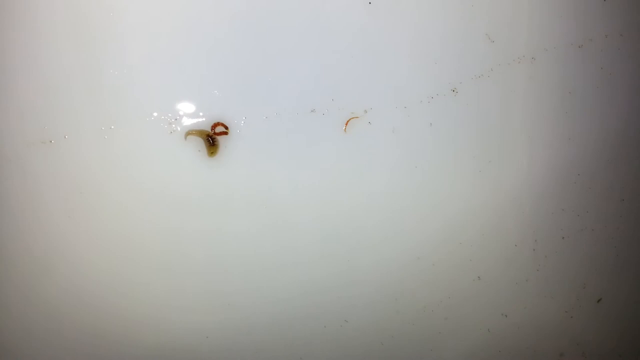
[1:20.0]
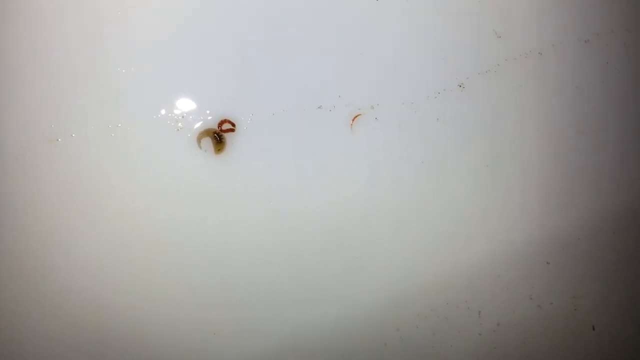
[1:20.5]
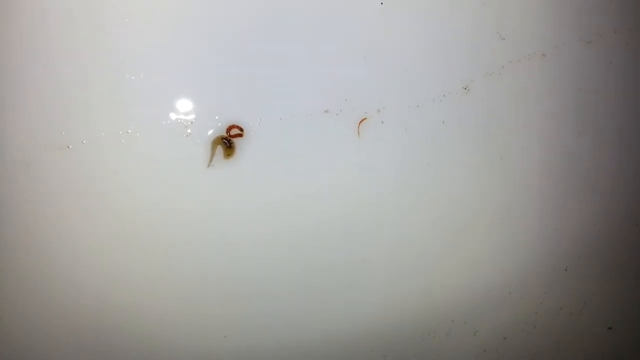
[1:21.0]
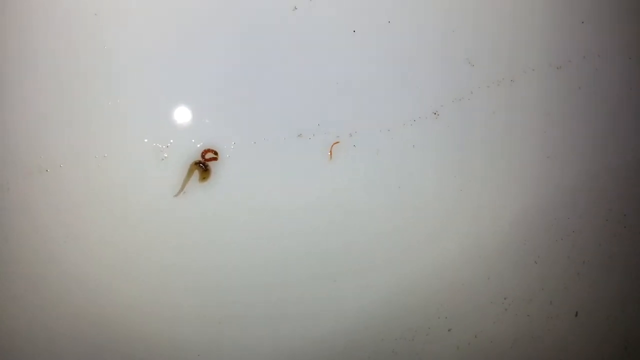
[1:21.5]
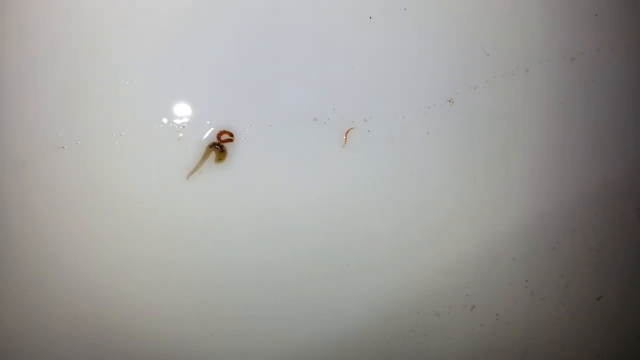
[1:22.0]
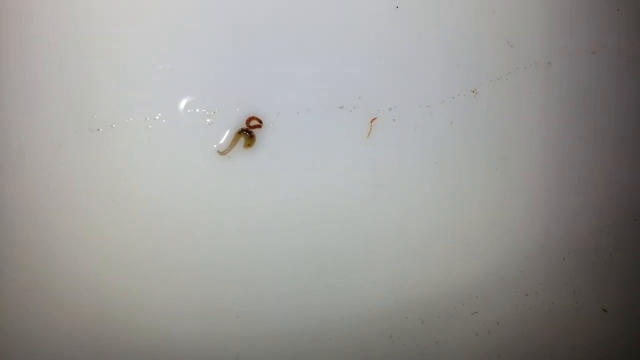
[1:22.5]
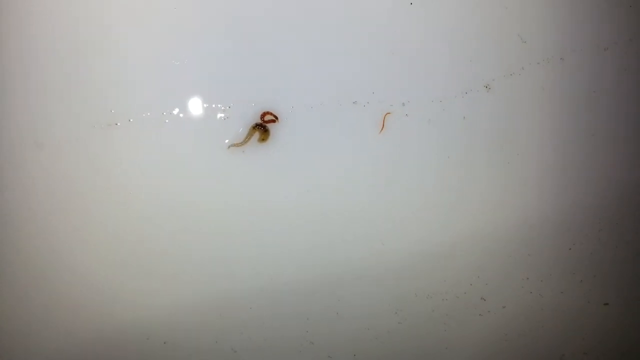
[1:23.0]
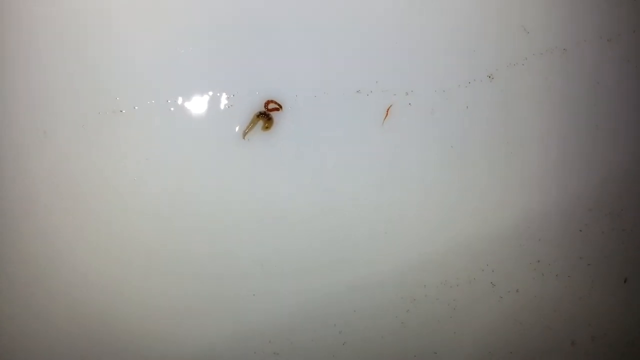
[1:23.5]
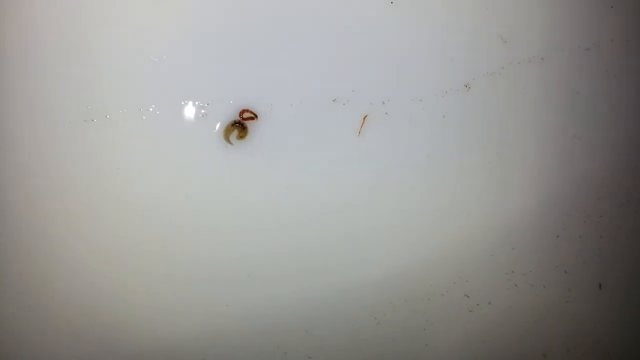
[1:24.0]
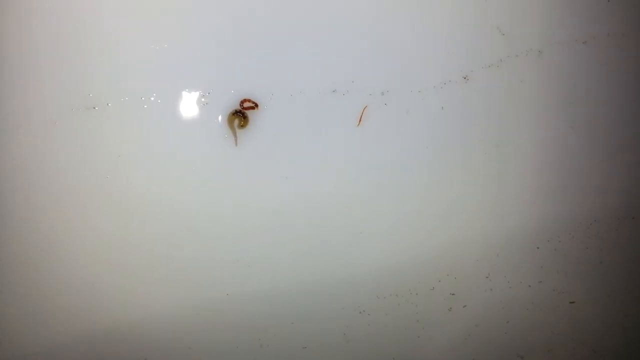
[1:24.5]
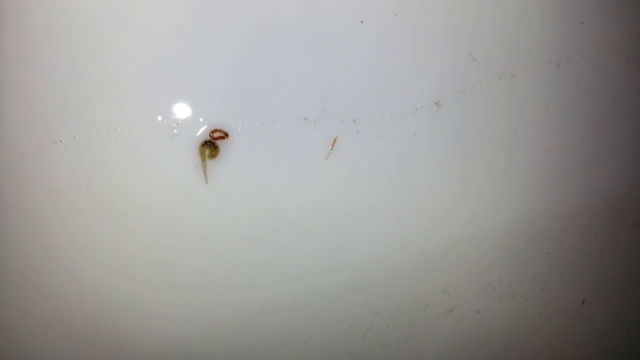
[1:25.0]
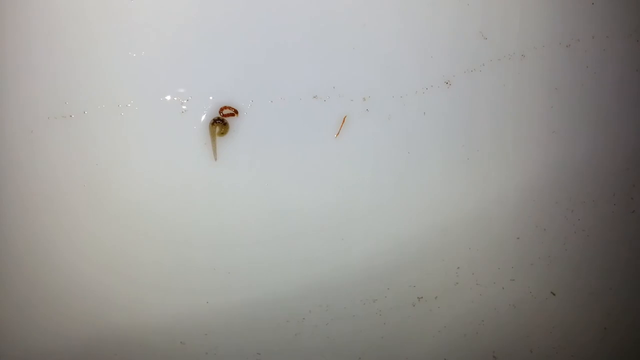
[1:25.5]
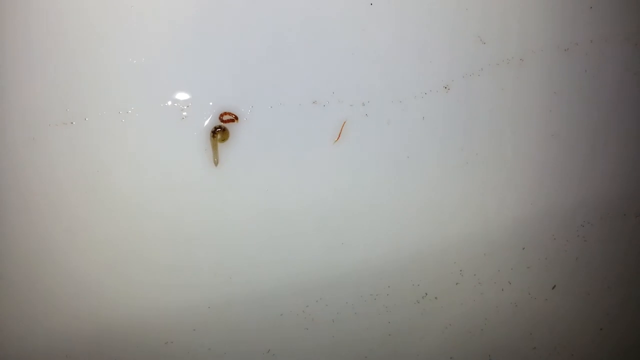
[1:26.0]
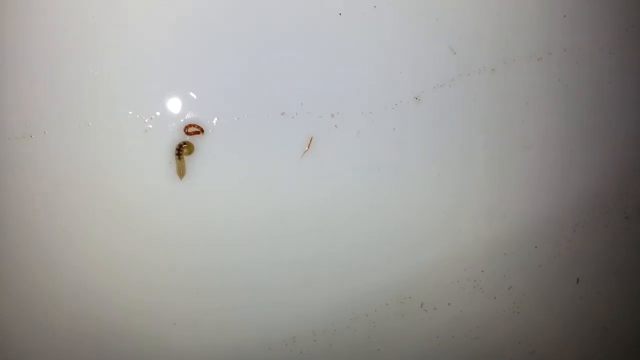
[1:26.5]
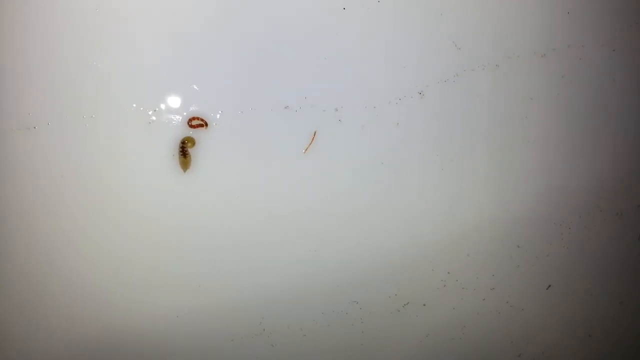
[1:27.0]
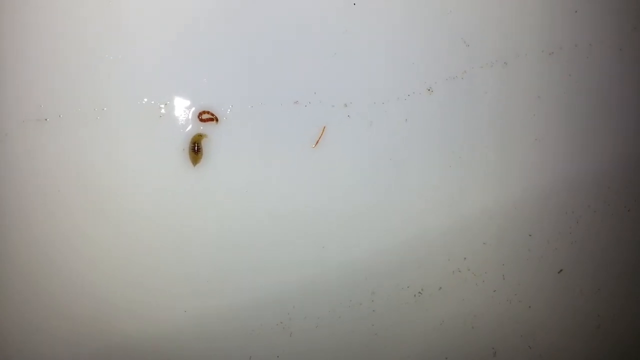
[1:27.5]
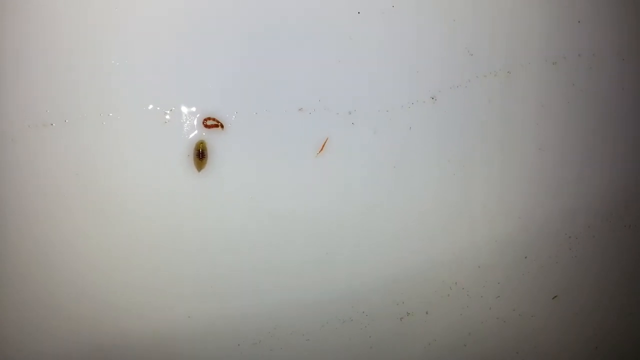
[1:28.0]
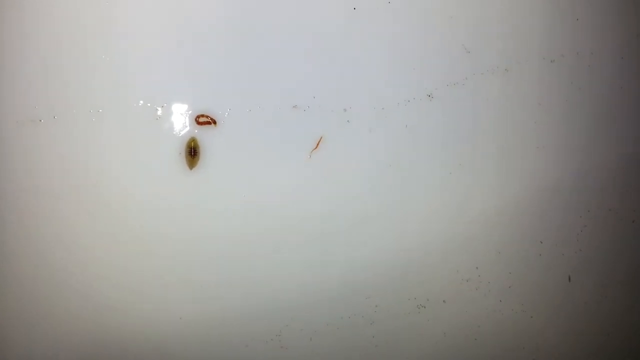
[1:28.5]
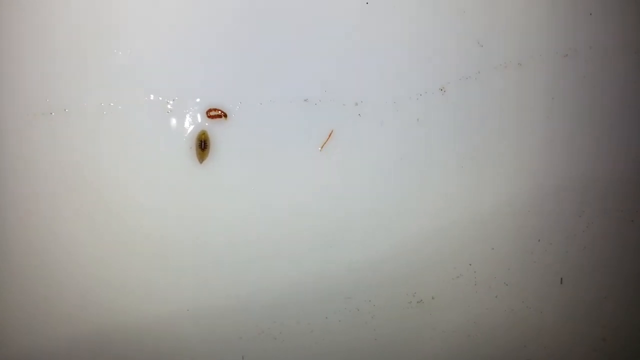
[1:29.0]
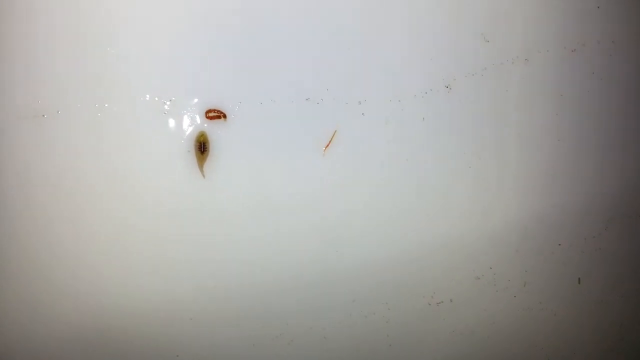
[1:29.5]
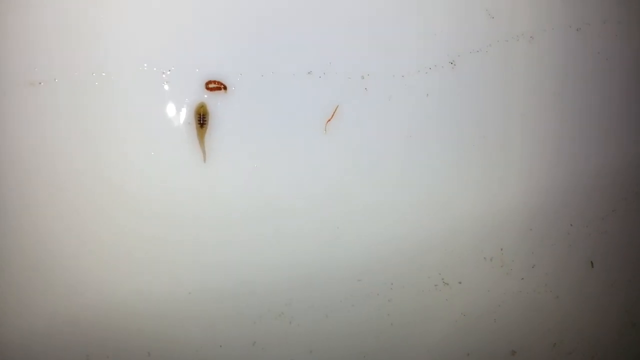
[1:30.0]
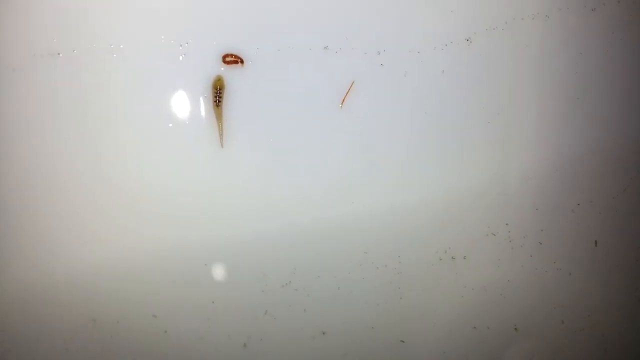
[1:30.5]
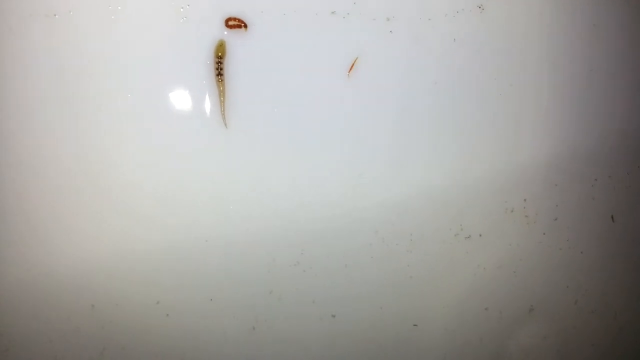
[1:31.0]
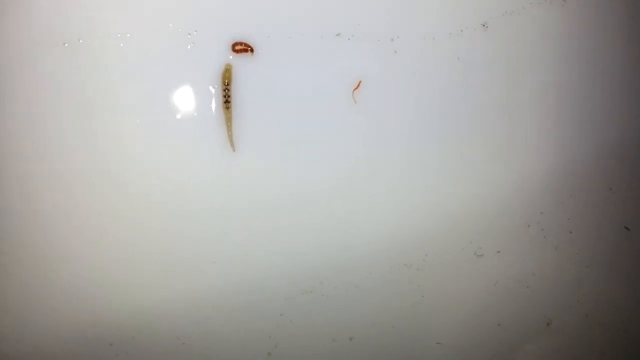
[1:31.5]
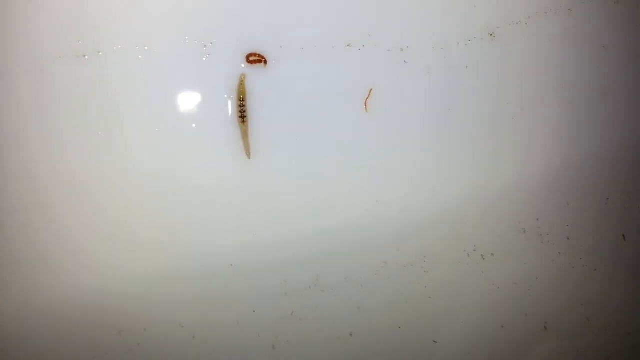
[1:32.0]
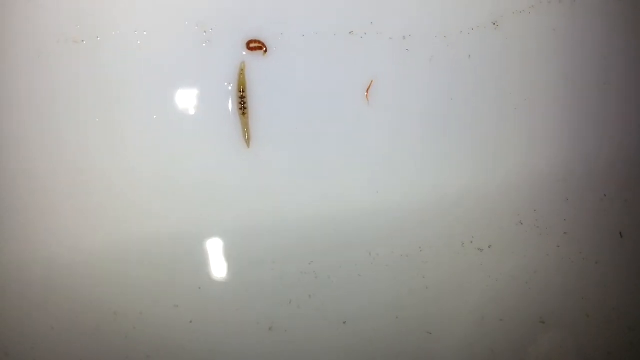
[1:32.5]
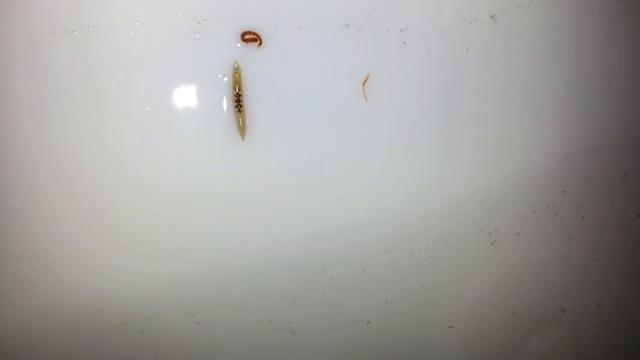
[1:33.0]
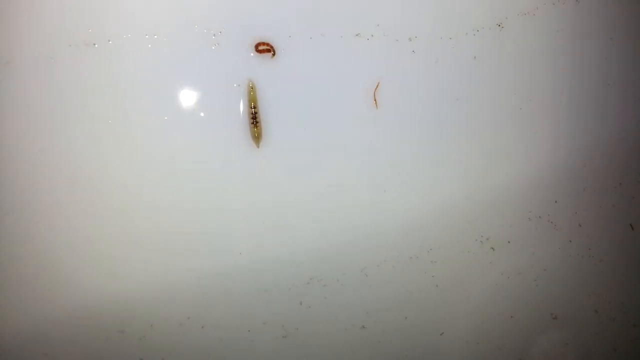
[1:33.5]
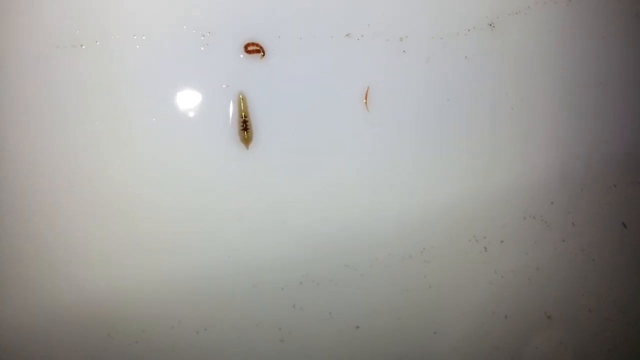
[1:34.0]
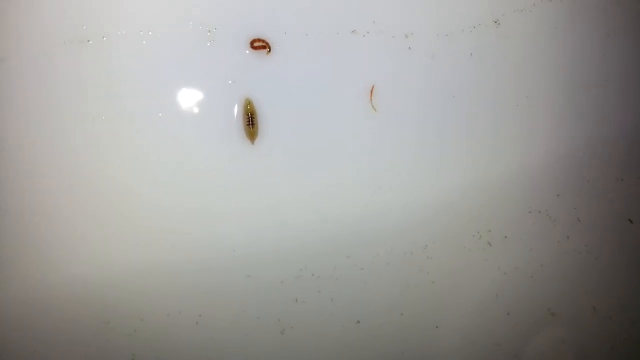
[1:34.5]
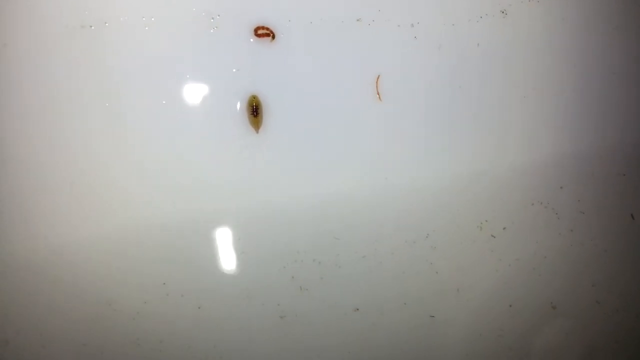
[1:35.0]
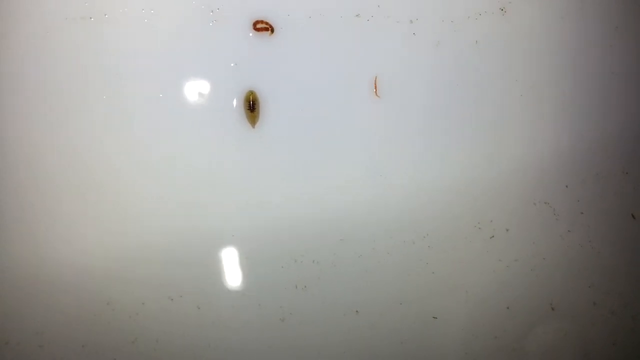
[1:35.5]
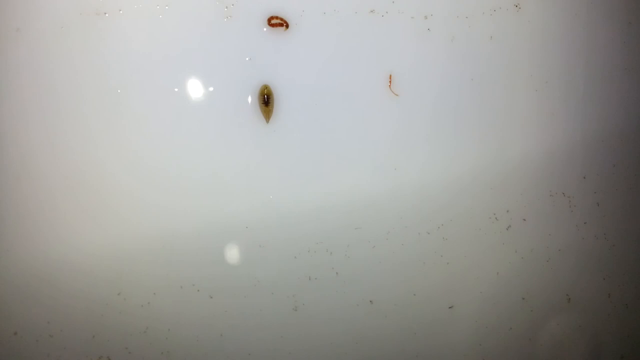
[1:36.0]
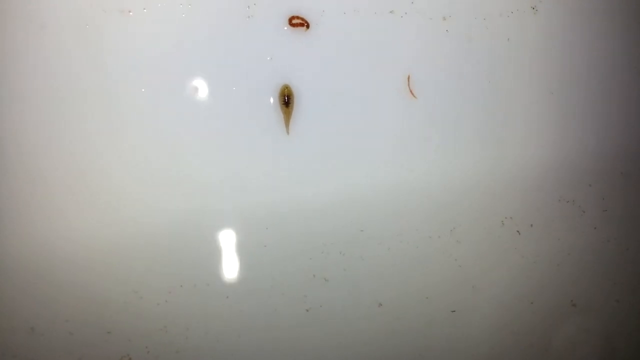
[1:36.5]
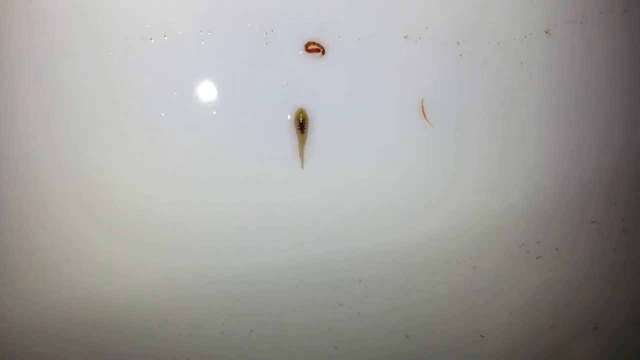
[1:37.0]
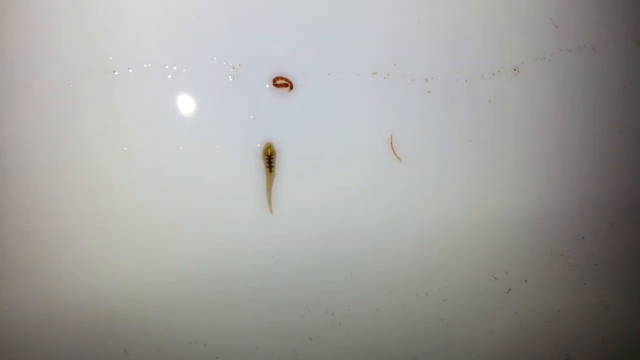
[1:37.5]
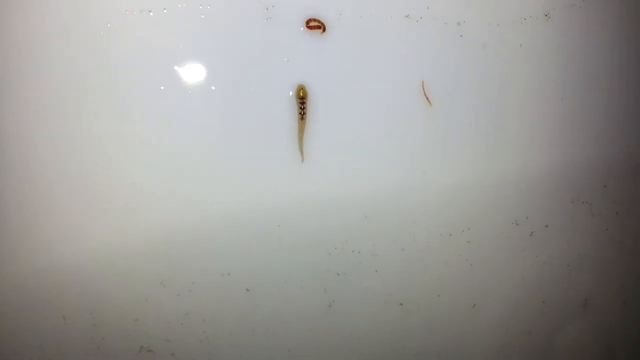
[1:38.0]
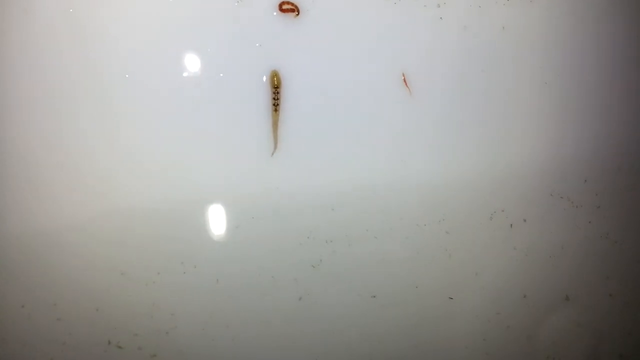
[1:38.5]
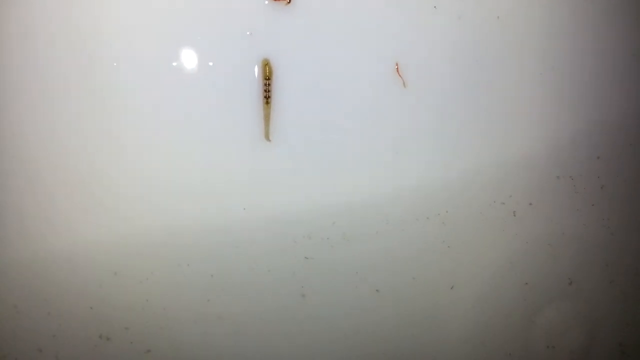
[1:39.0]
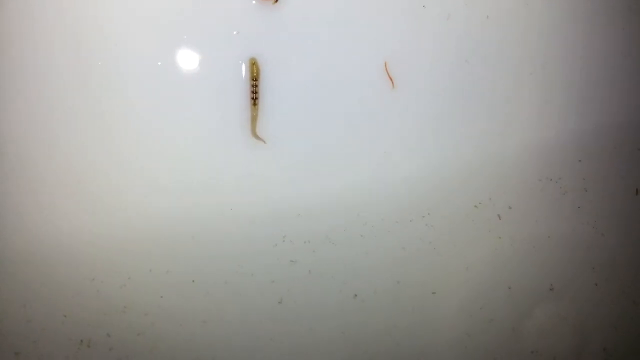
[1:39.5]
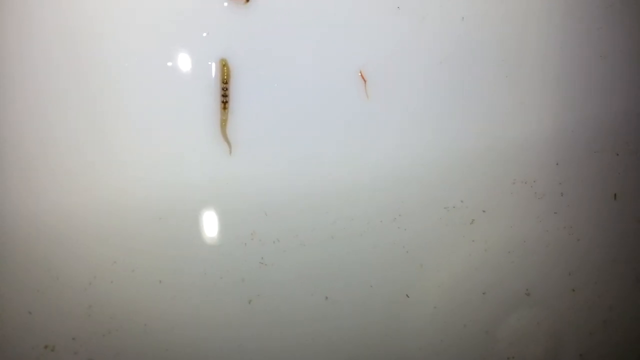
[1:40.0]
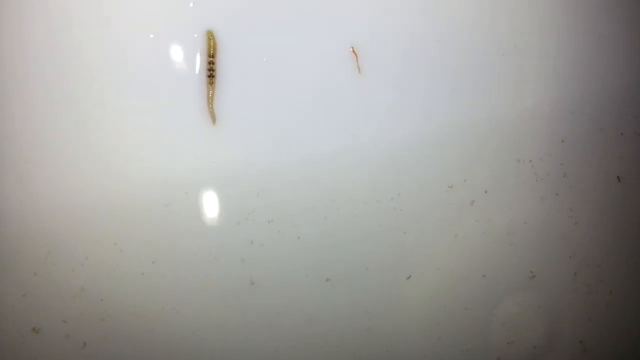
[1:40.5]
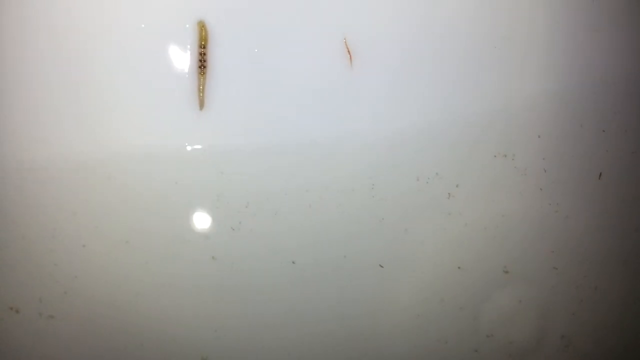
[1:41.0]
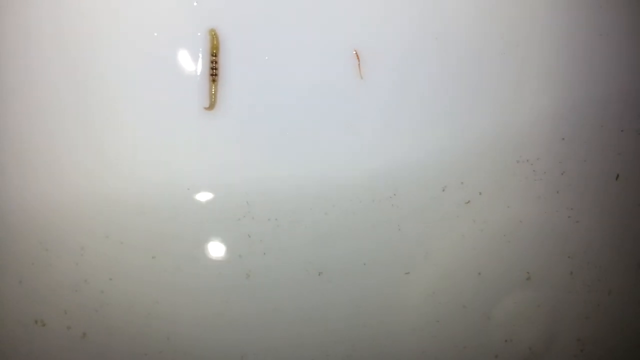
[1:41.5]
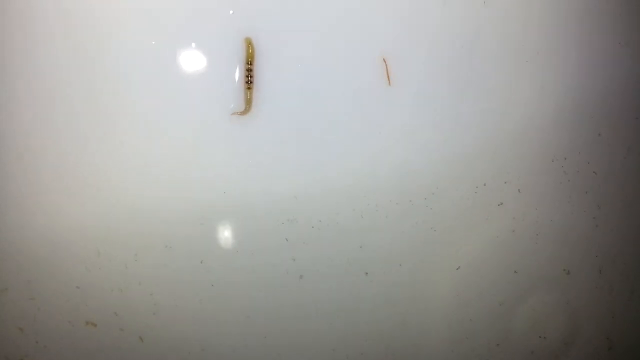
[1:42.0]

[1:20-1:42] The view stays zoomed in on the worm in the middle. It is quite long and brown, with a transparent body and a black part inside that is visible through it. The worm moves closer to the water, stretching and contracting its body: it stretches the front to move further, then contracts so the back comes closer to where the front is. The other worms on the upper part just wobble in place, while this one moves closer and closer to the water level over the wet surface of the cup. It seems to be heading toward the water.